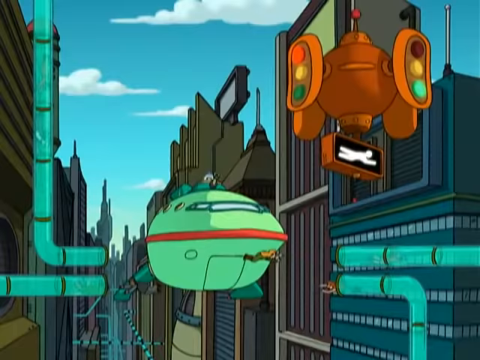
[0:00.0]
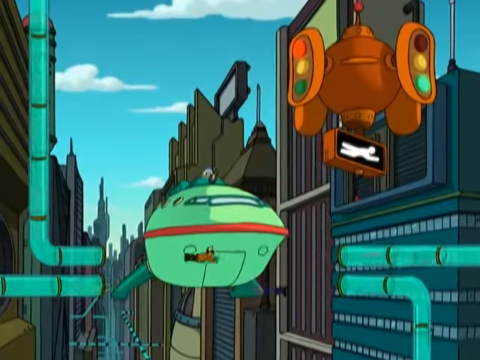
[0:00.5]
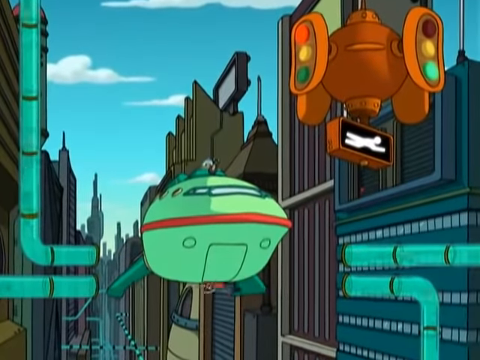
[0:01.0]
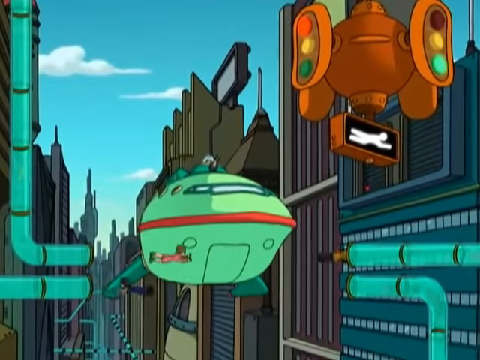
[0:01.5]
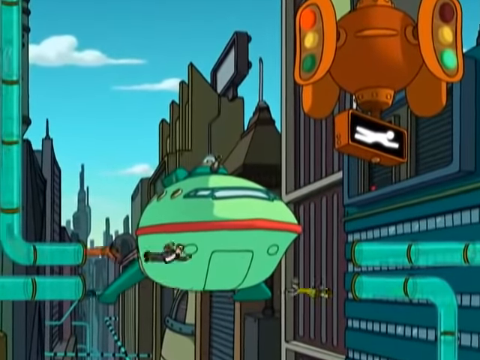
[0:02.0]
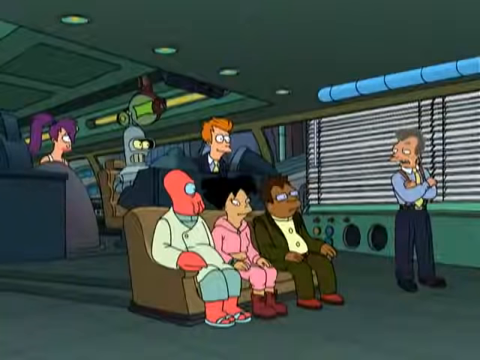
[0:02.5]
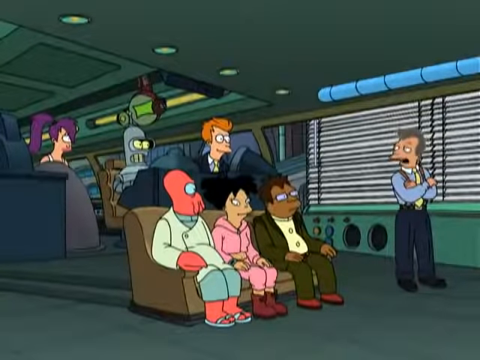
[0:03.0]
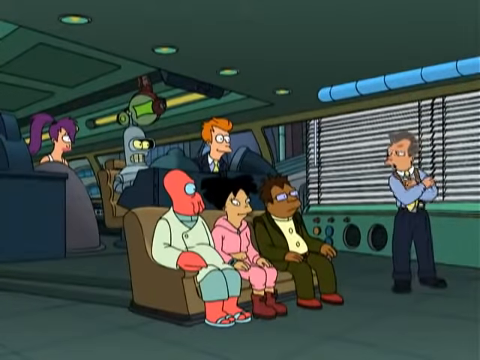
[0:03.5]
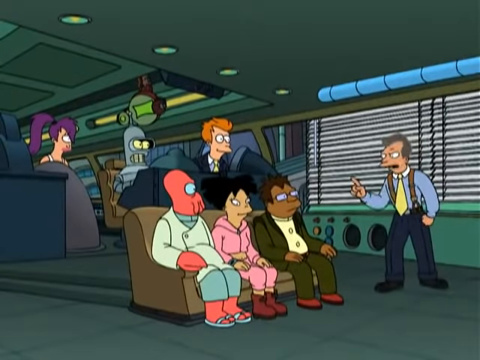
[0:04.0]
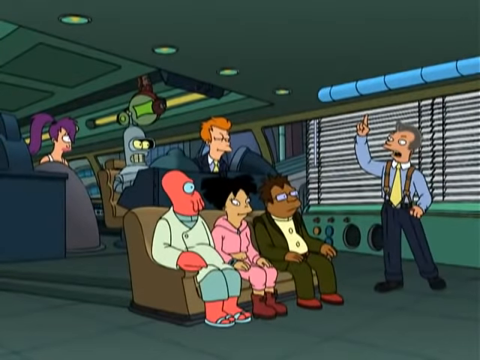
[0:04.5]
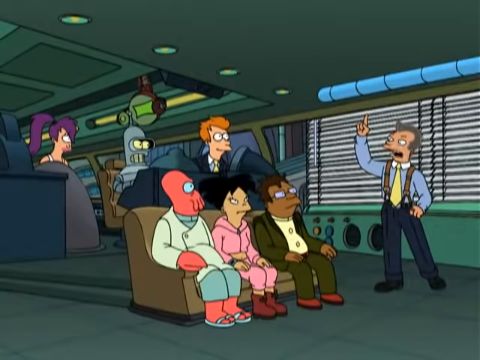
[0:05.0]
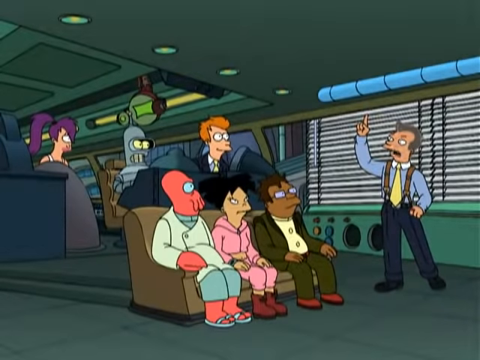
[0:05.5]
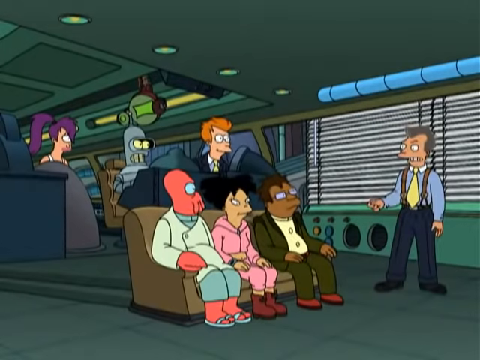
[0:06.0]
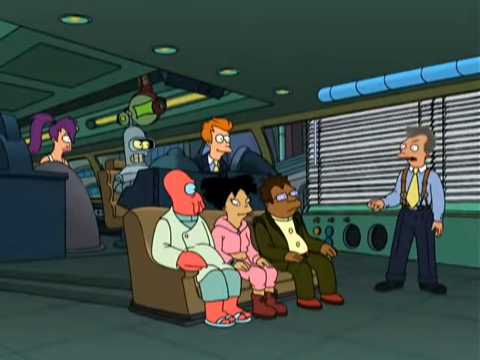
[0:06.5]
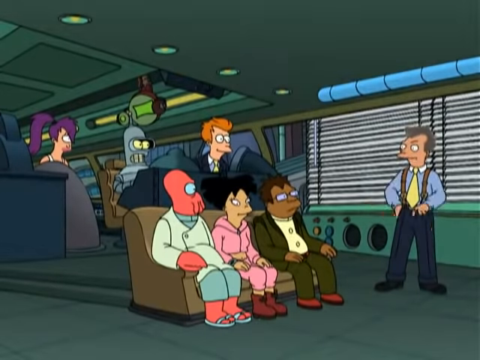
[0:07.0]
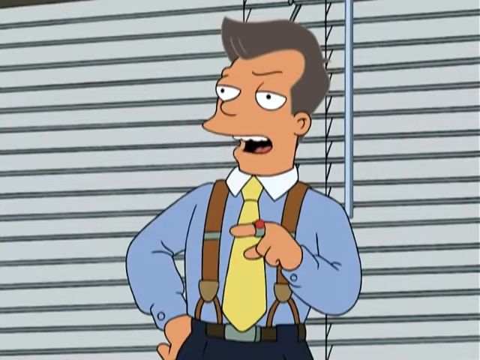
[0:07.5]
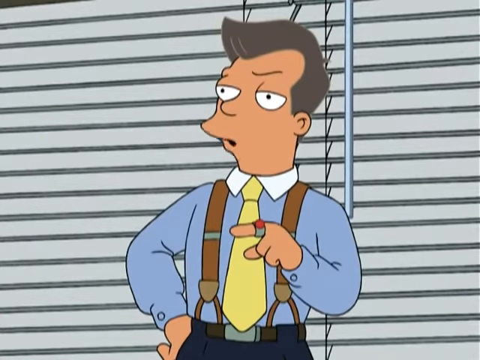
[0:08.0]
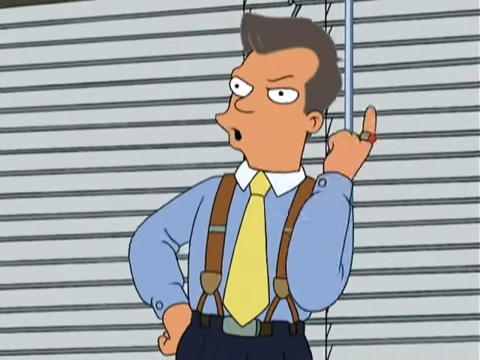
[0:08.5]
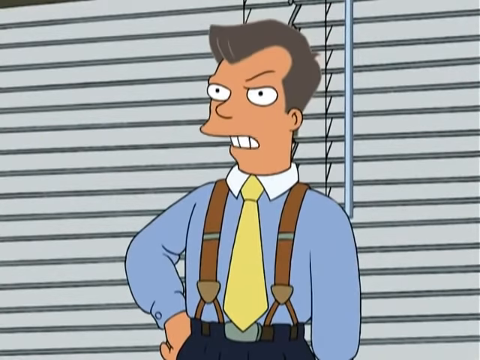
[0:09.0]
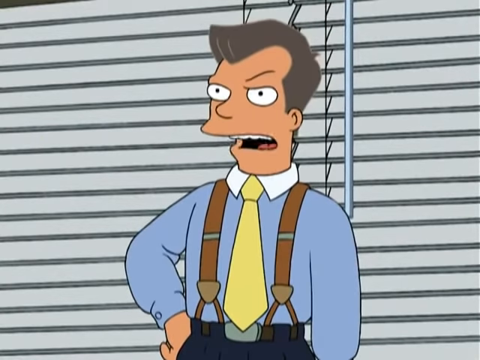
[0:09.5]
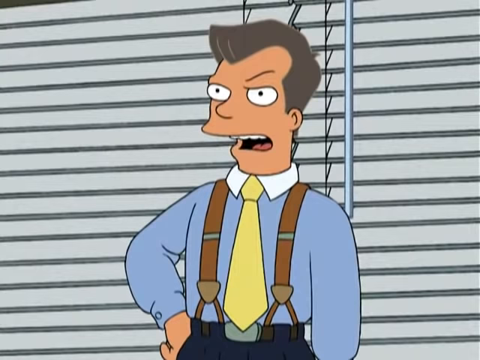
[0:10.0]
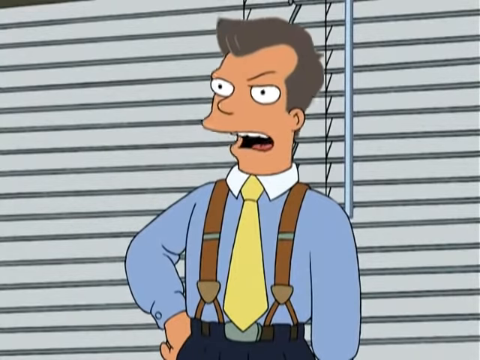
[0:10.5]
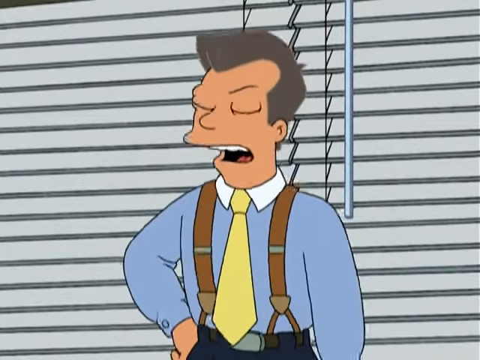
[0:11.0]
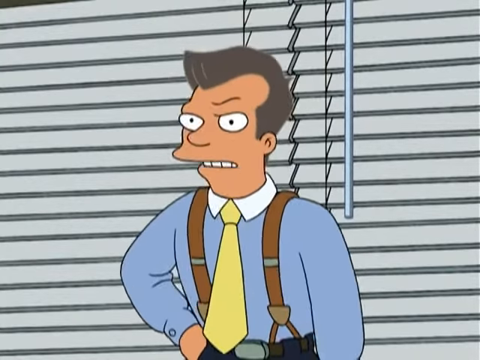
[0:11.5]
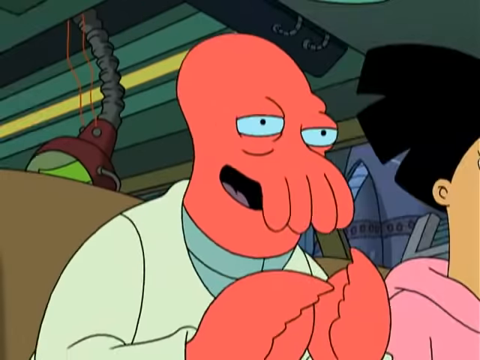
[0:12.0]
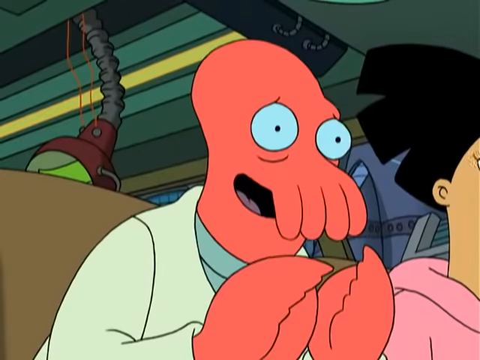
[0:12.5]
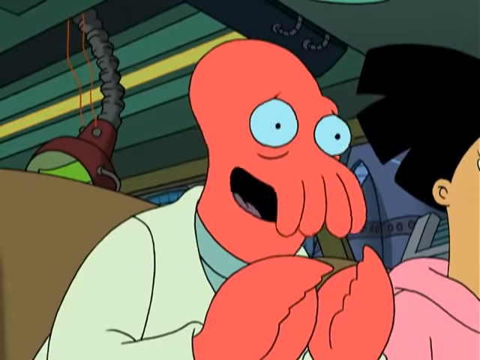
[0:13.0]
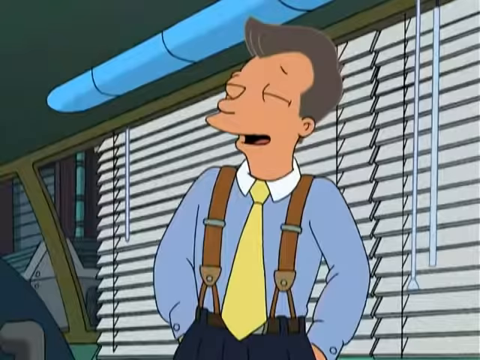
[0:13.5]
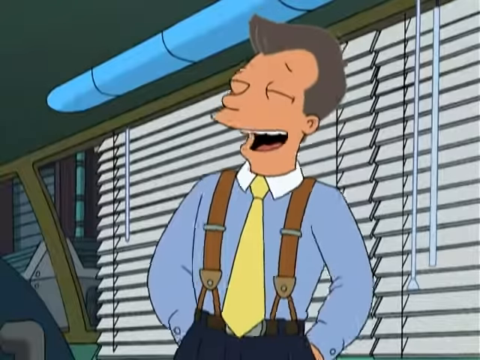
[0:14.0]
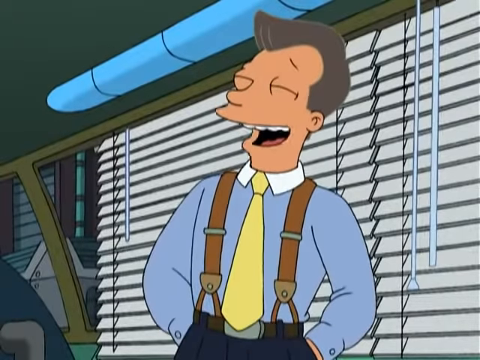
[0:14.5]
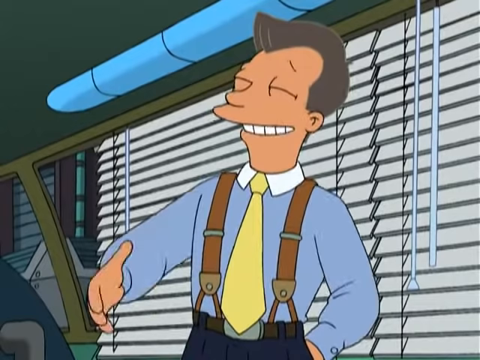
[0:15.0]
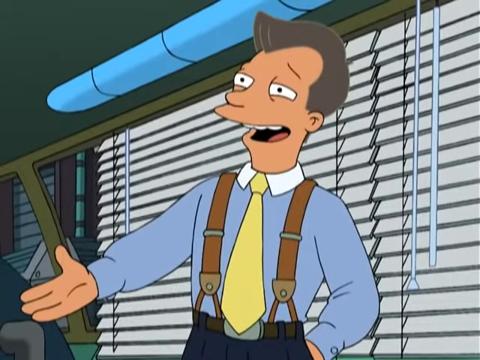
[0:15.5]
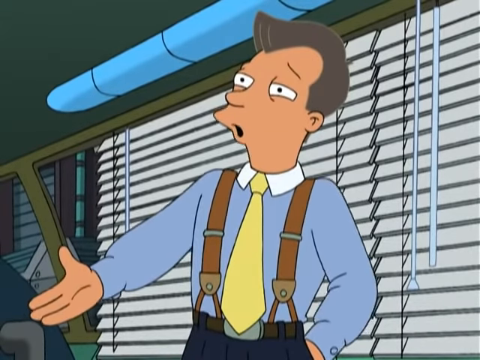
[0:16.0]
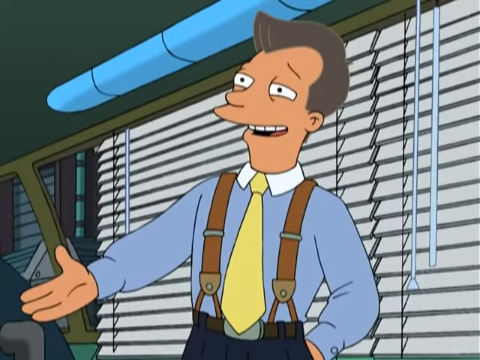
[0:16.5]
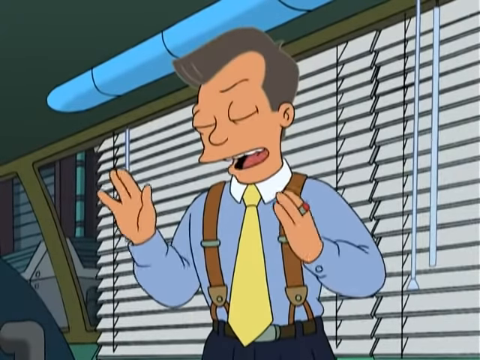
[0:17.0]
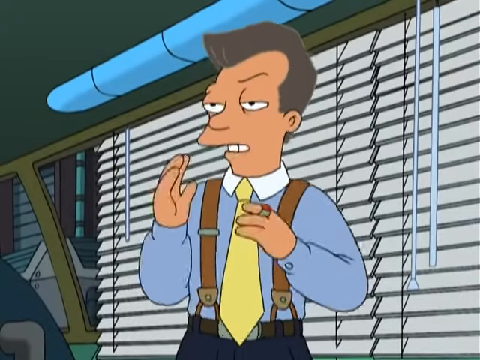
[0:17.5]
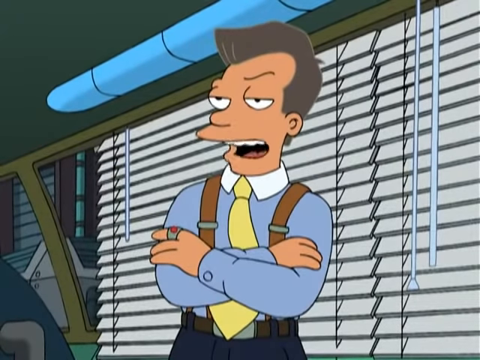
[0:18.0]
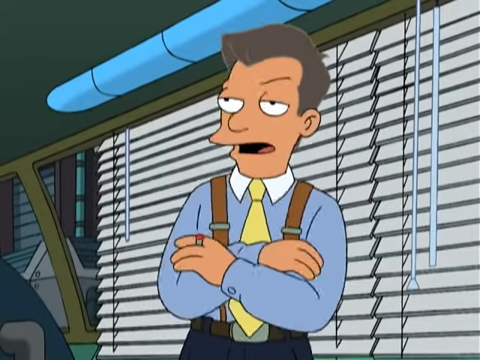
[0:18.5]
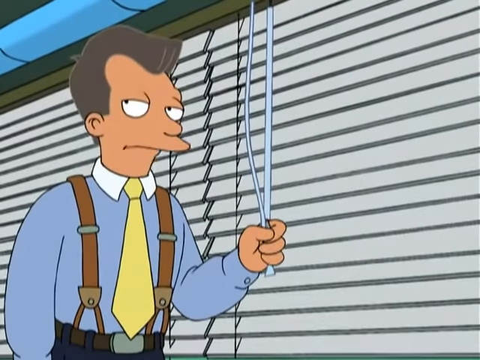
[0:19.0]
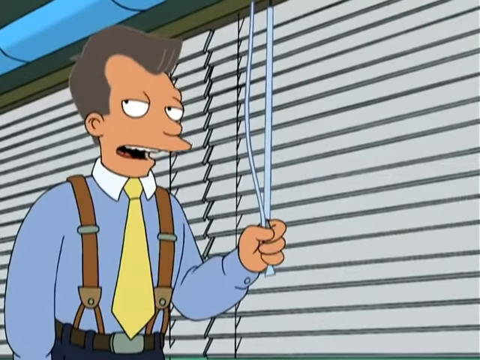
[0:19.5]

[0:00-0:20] The cartoon begins with some kind of green vehicle float hovering in the air, with several people flying around it. It is apparently named Derek the Alien. The scene then moves inside, where a man in a blue shirt, yellow tie and suspenders appears to be speaking to the rest of the cast, who are sitting in chairs, while he stands in front of a window with white shutters. He says something, chuckles a bit, and continues talking. Then he turns around and pulls up the blinds, opening the shutters of the window behind him.